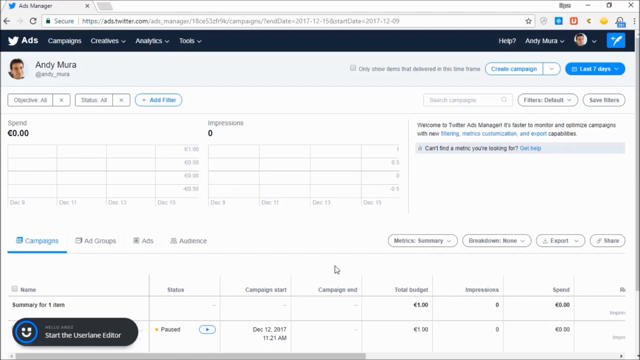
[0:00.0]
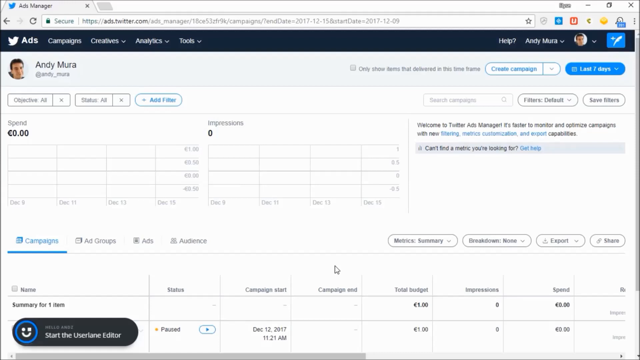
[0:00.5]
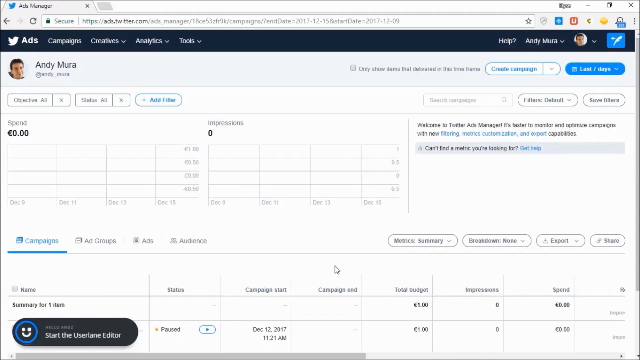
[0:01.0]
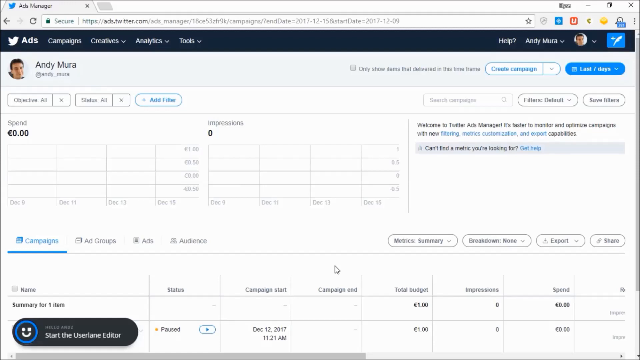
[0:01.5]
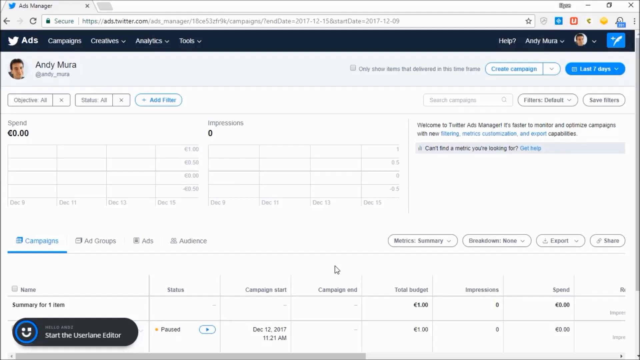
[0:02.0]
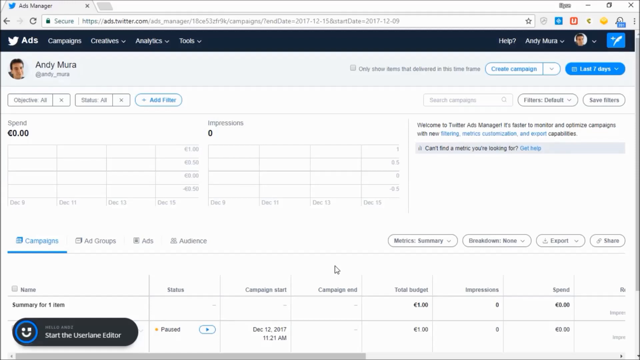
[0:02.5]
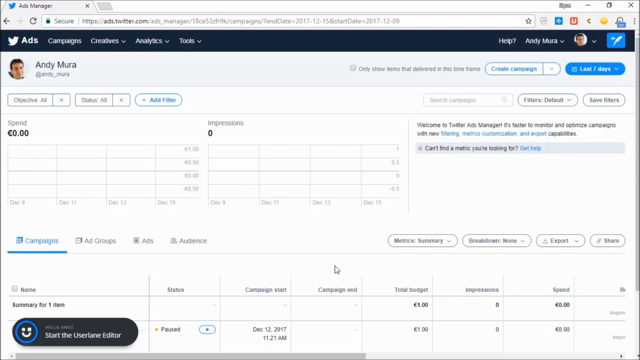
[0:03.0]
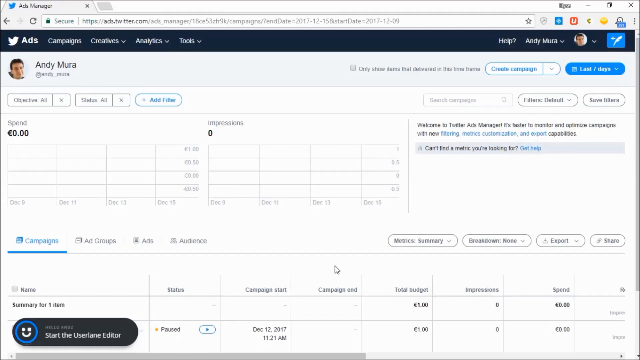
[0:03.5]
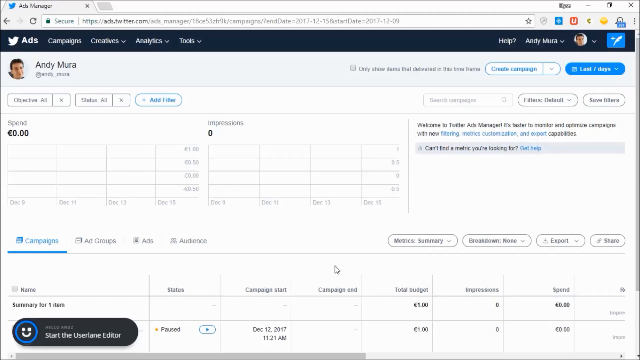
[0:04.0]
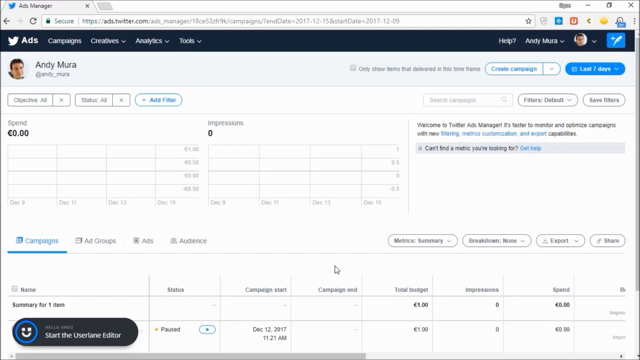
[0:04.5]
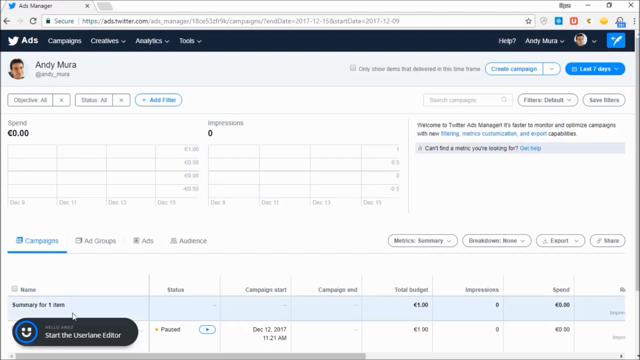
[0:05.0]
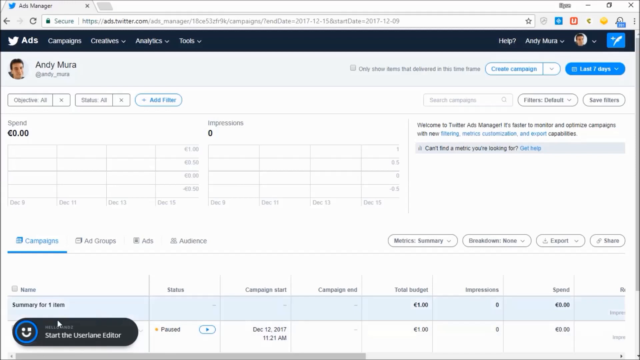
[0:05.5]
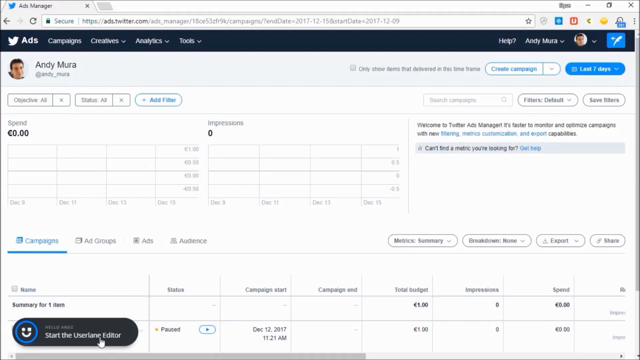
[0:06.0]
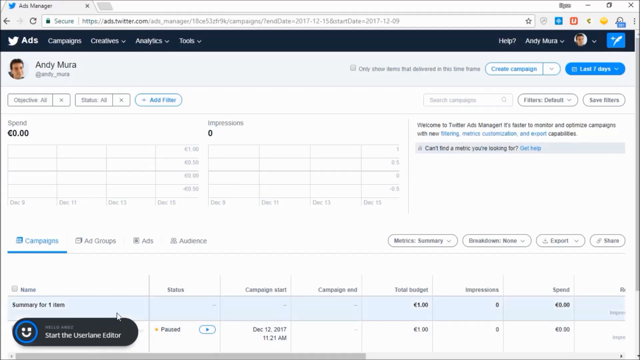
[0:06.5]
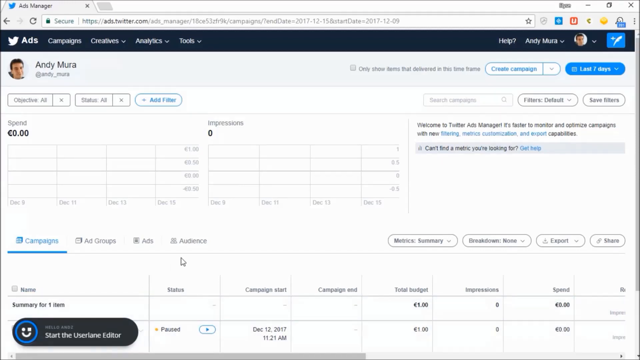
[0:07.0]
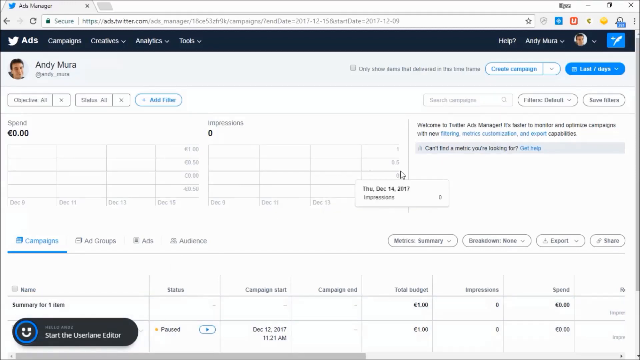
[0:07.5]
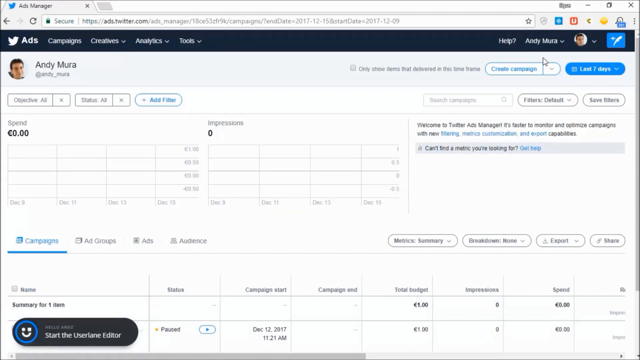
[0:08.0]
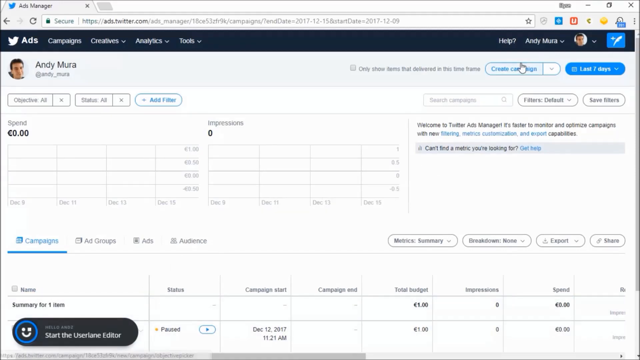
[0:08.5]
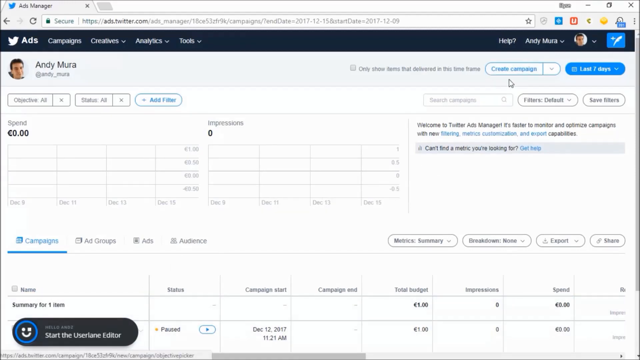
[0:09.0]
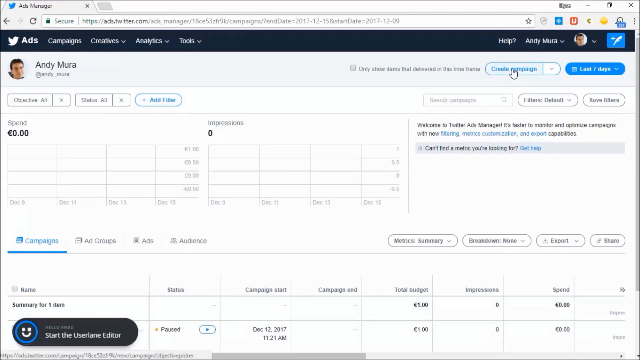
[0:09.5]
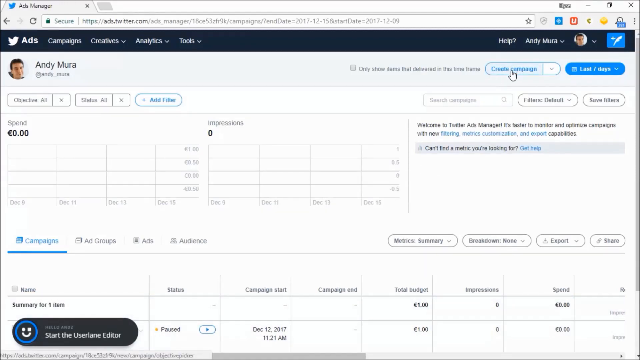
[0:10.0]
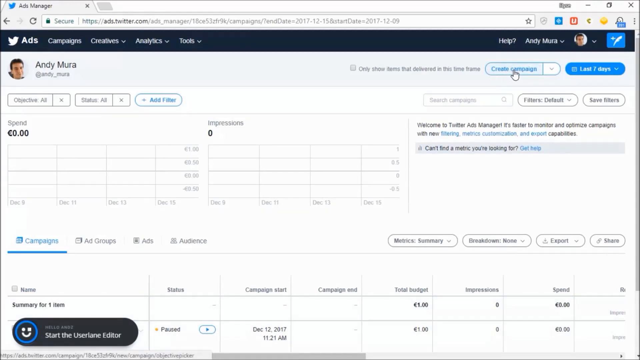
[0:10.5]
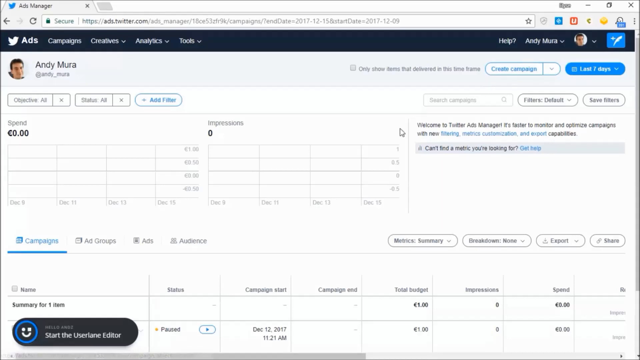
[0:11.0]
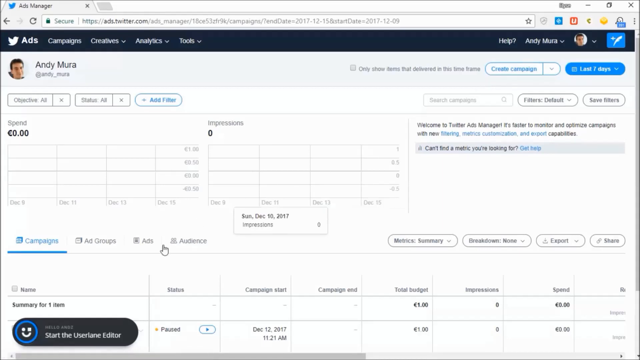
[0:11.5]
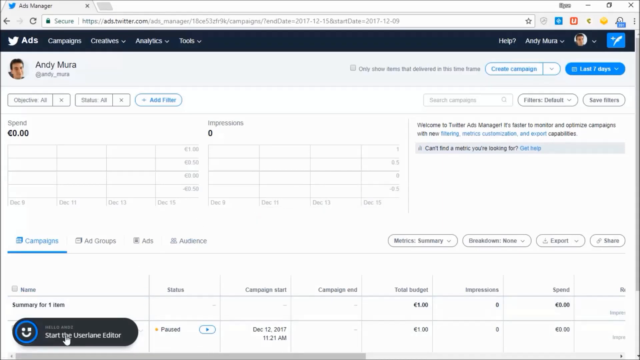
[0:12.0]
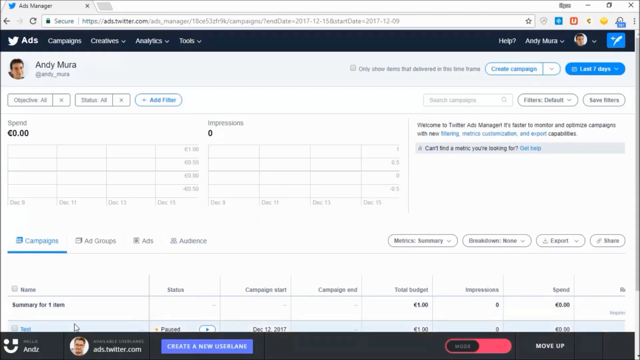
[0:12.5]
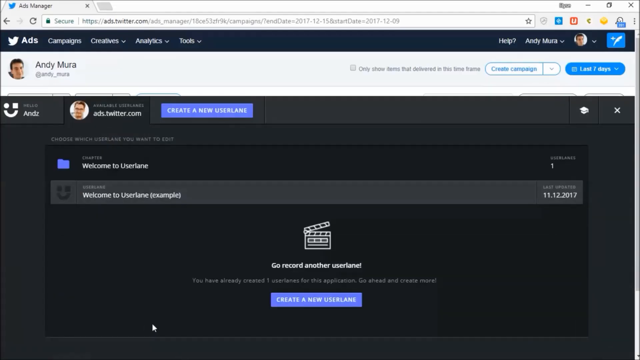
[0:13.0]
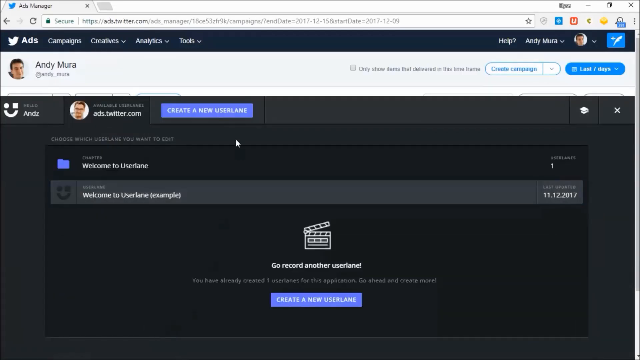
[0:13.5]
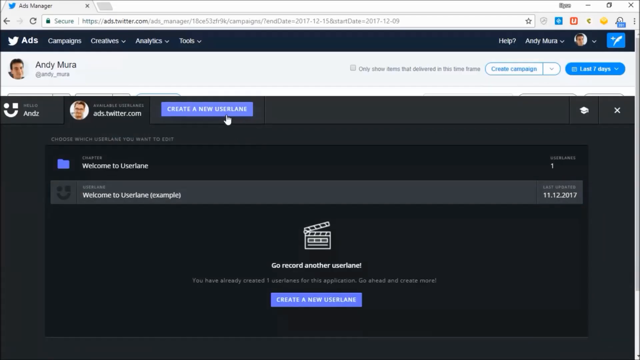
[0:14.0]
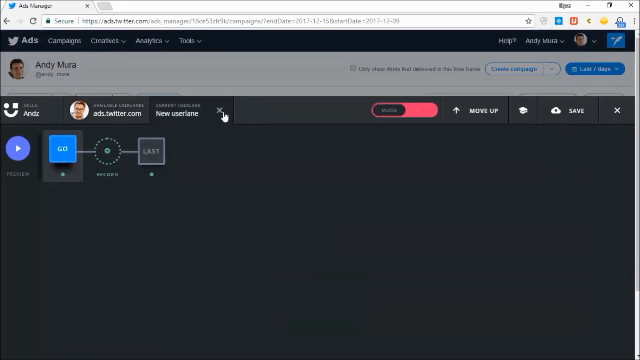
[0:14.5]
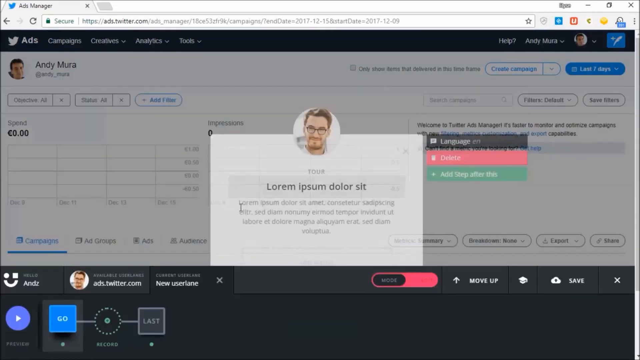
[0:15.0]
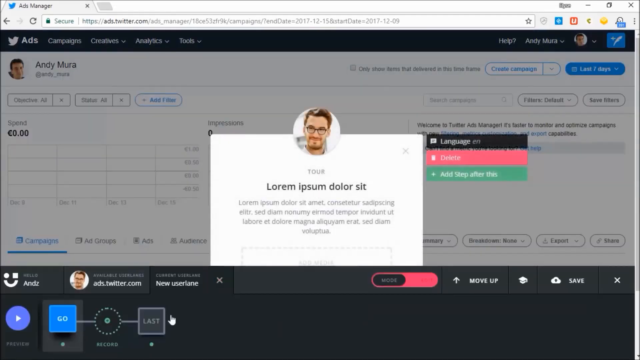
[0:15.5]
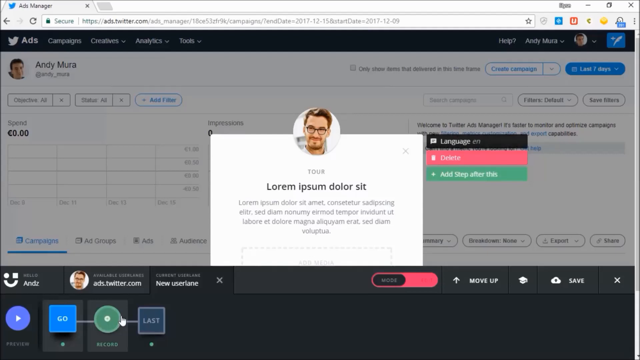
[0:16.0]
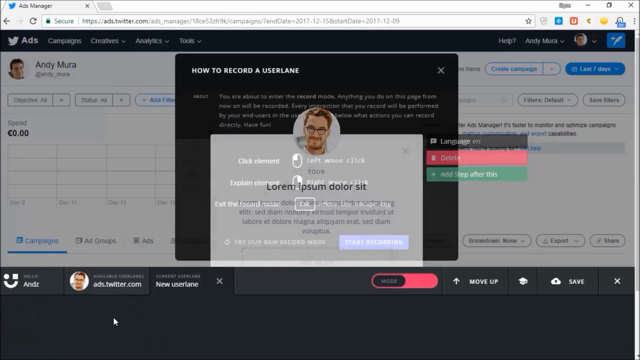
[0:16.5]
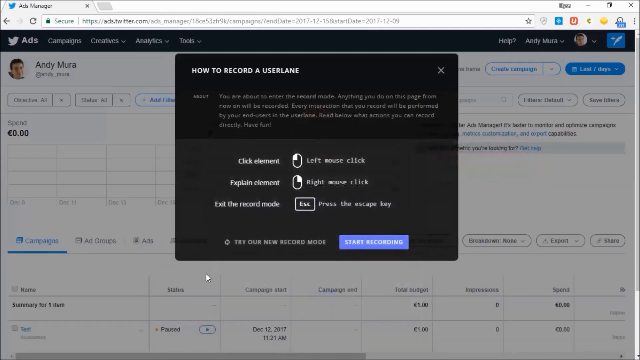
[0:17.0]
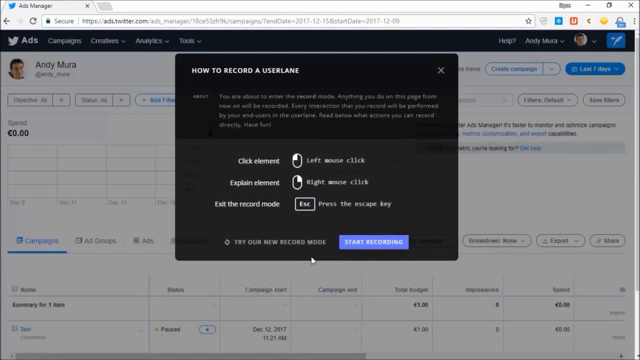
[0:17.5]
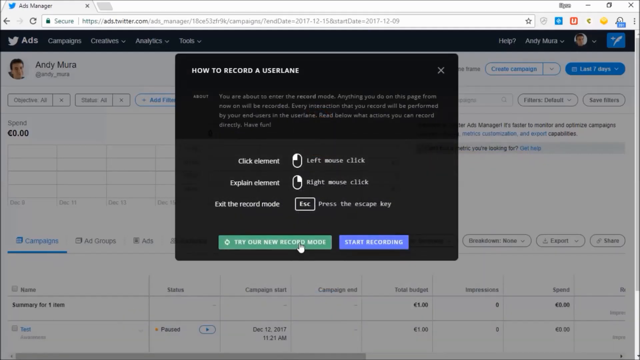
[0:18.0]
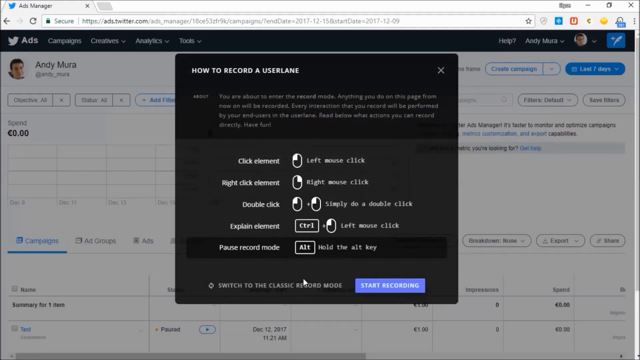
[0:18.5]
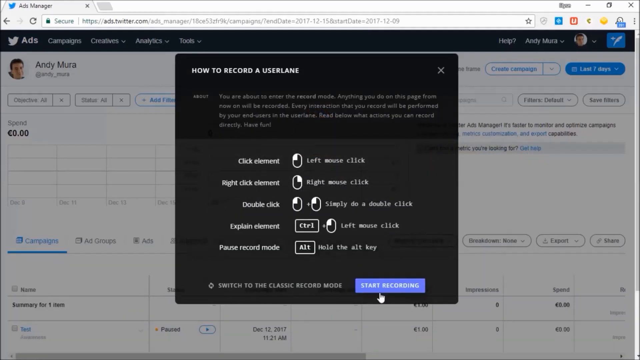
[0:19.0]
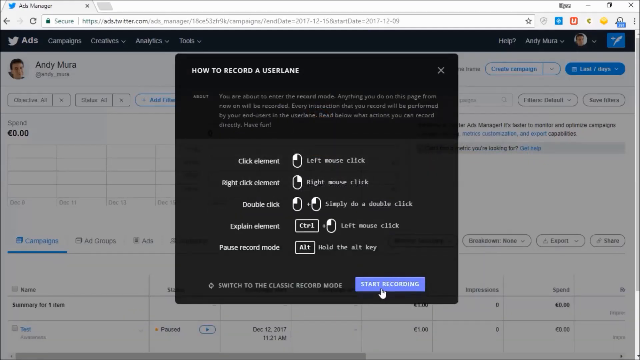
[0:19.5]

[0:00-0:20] The video opens on what appears to be an ads filter page on a back end. Someone apparently named Andy Mora has the page open; it says "ads" at the top, and it seems to be for Twitter. Amounts are in euros: spend shows zero euros and impressions show zero. An option to "create a campaign" is in the upper right-hand side. Information is shown for the last seven days, with an option on the right-hand side to extract it. Further options below include campaigns, ad groups, ads, and audience. The user moves the mouse back and forth to what seems to say create a new user lane, then goes to an area about how to record a user lane, where information is displayed, and begins clicking to enable it.